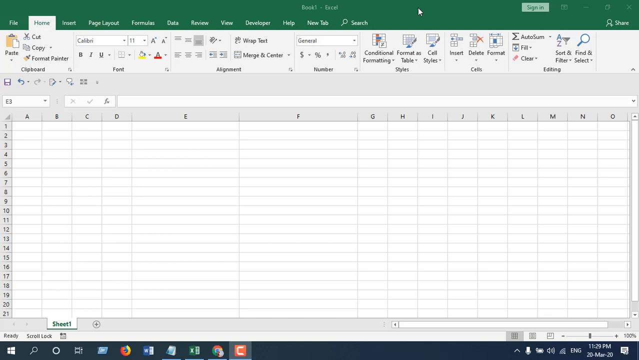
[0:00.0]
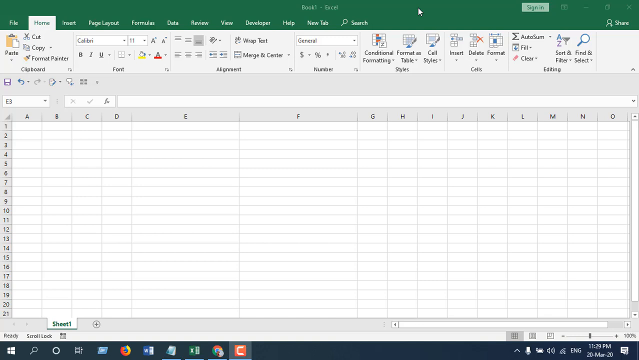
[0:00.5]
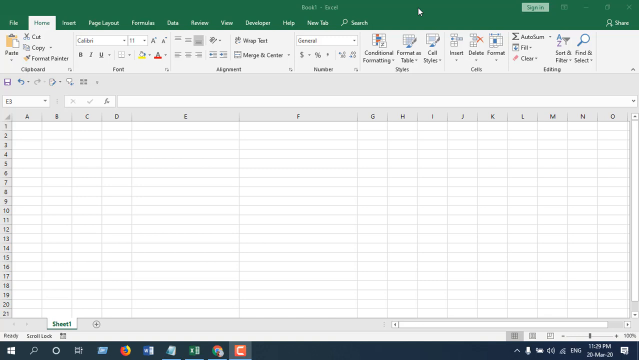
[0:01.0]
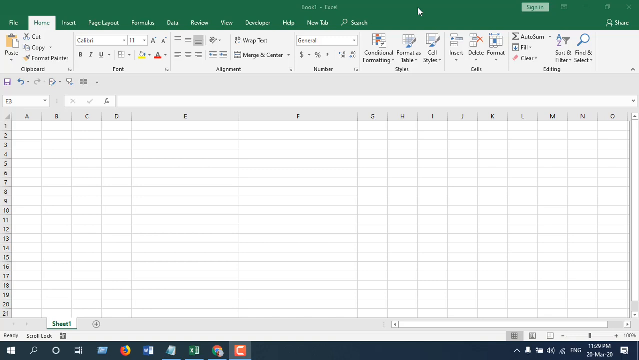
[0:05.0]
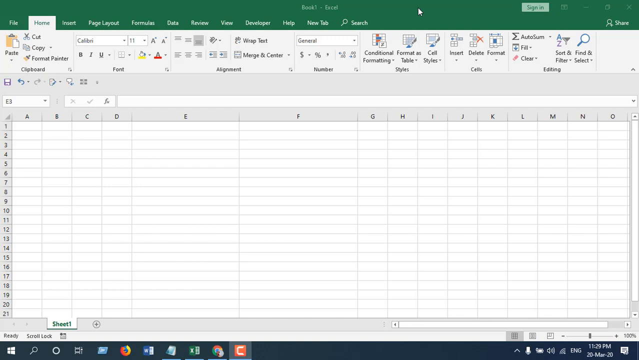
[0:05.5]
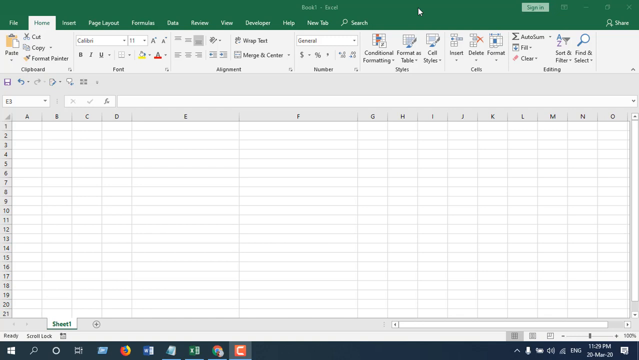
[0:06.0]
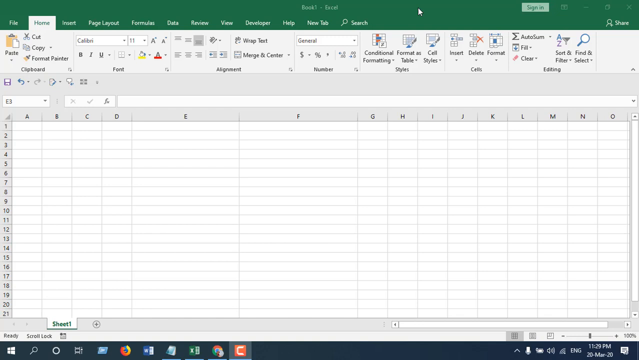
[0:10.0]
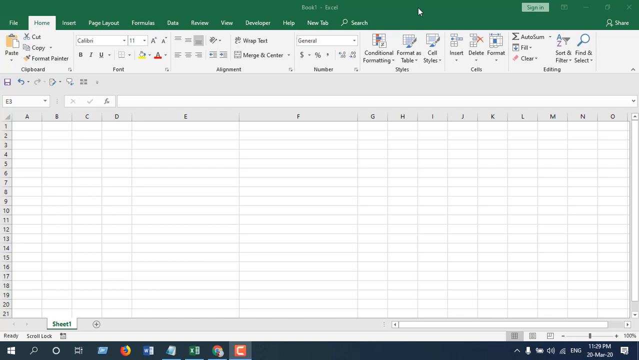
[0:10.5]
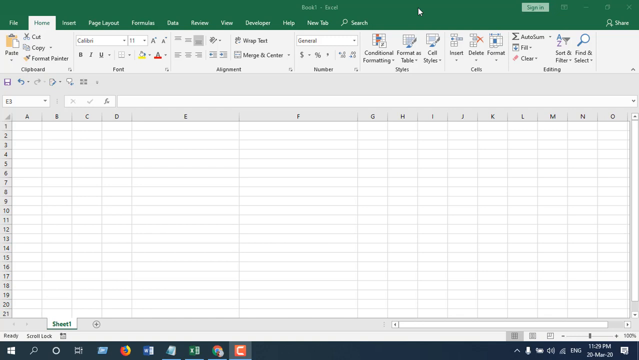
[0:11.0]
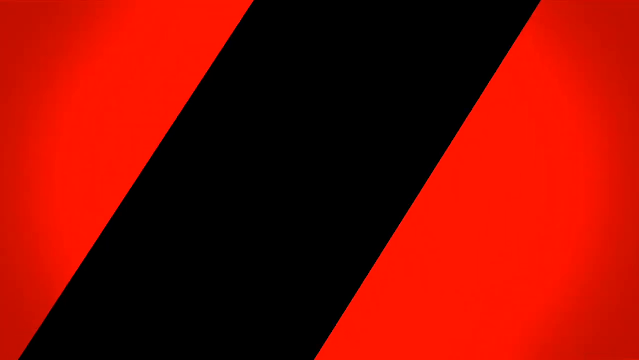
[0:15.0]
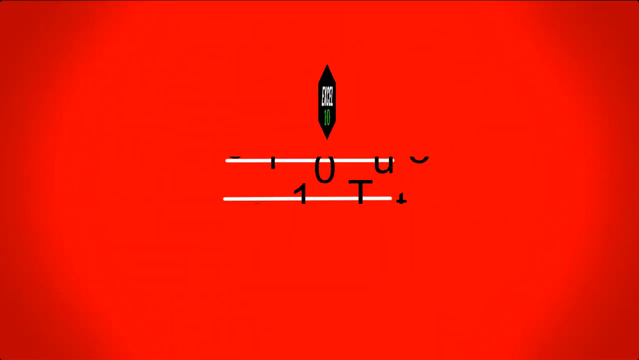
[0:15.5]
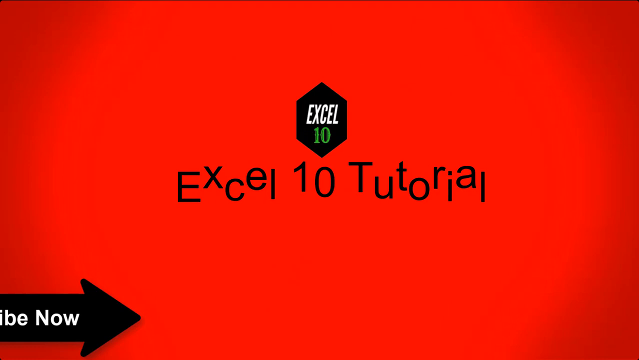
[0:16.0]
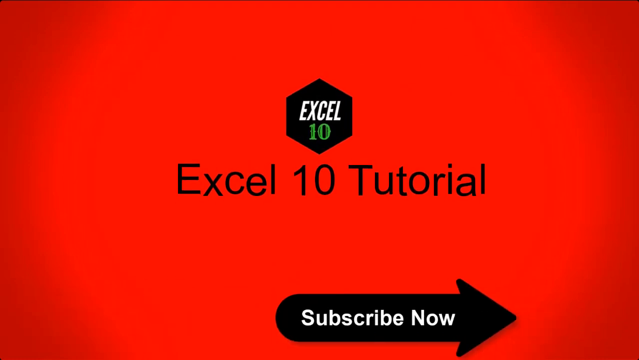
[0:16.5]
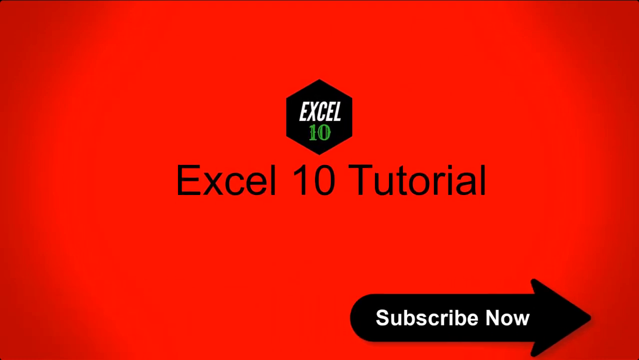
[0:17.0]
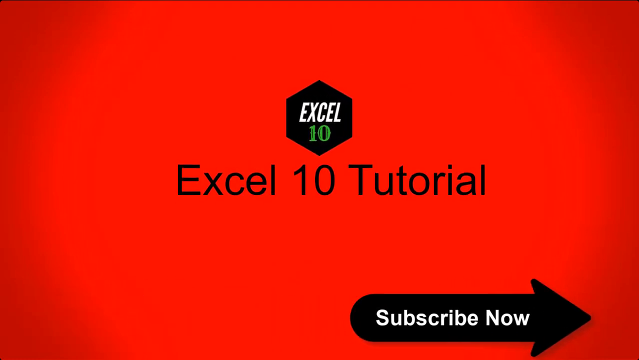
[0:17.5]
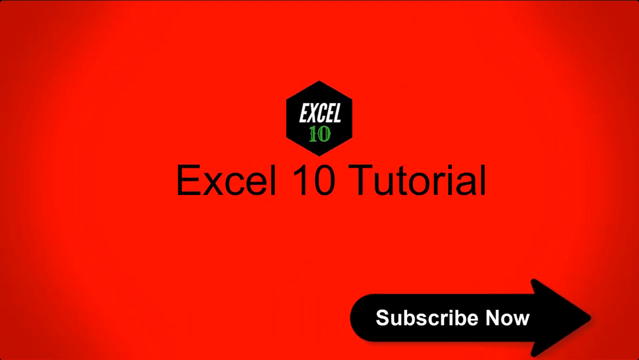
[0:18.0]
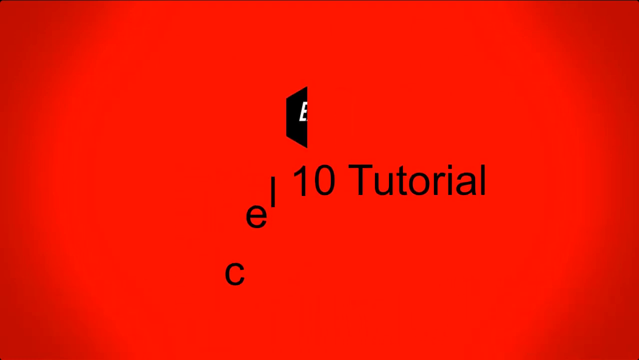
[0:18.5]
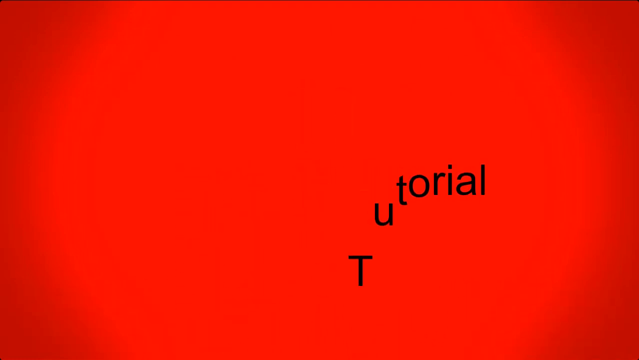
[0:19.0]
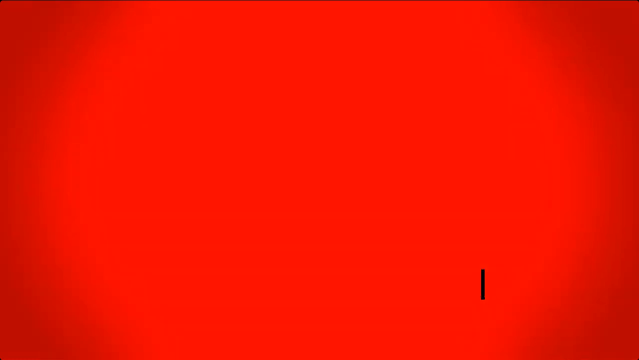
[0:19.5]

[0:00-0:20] An Excel document is open, and it looks like it is being shared from a PC or a laptop. The document is editable, and nothing is written on it yet. At the bottom, "sheet 1" is shown. Along the top are file, home, insert, page layout, formulas, date, review, view, help, new tab, and search. Column letters run from A to O. The person can type on the document and edit what they have typed. At the end, the text "Excel 10 Tutorial" appears, suggesting the person is apparently teaching how to use Excel.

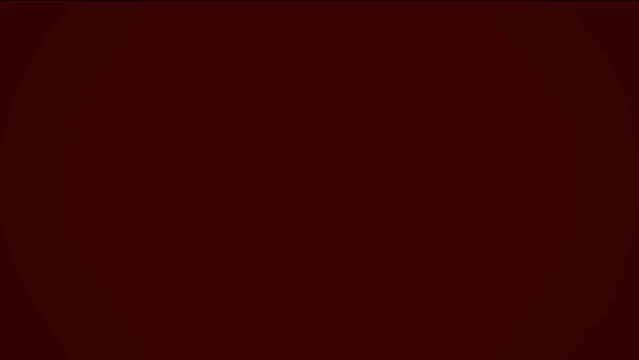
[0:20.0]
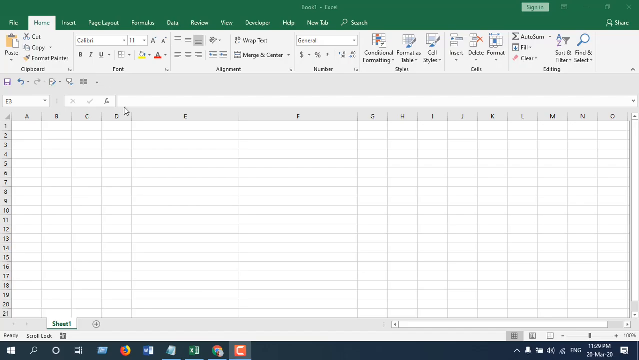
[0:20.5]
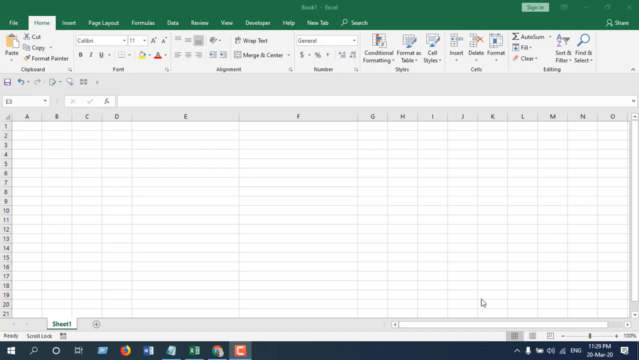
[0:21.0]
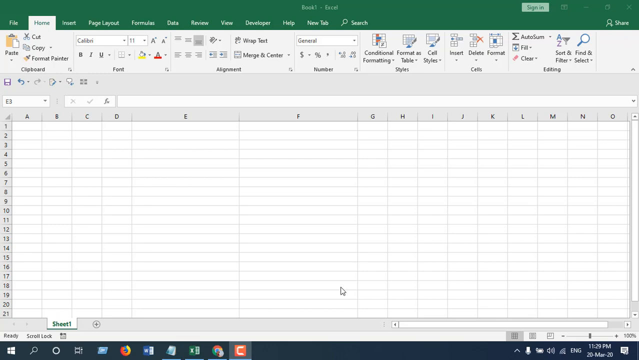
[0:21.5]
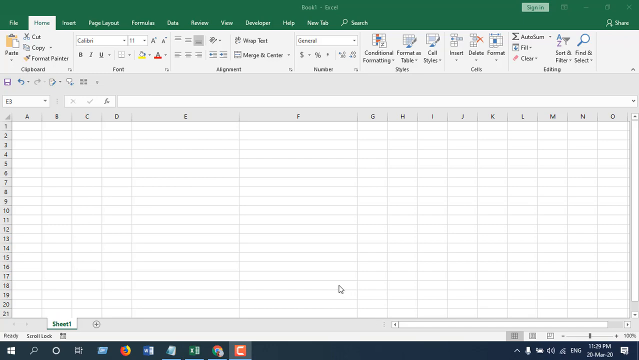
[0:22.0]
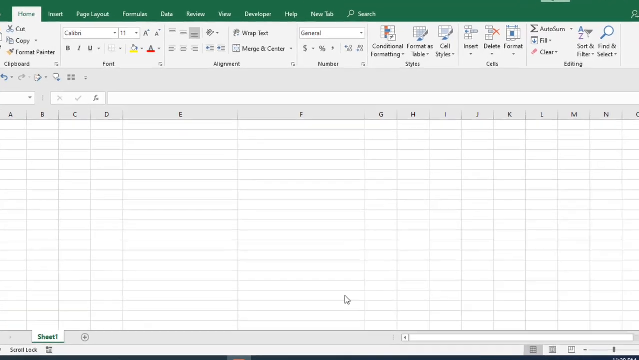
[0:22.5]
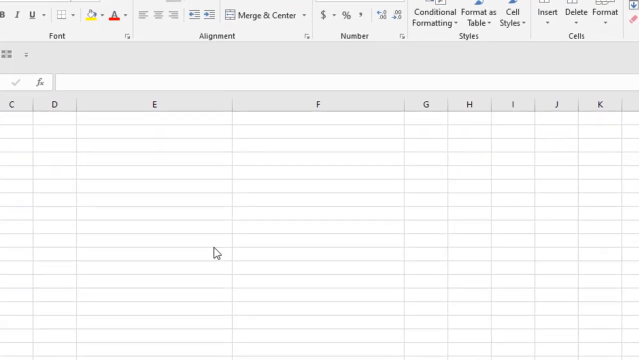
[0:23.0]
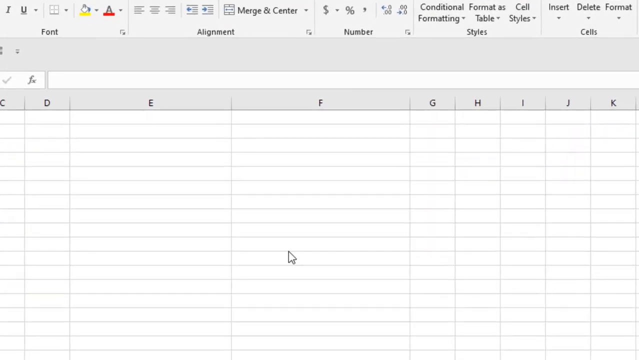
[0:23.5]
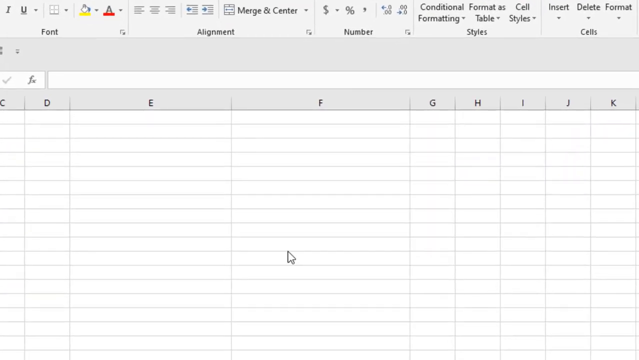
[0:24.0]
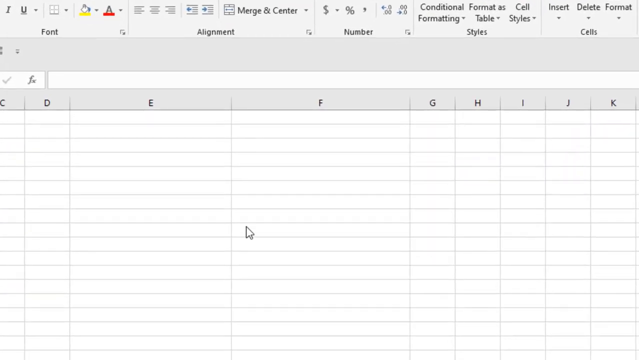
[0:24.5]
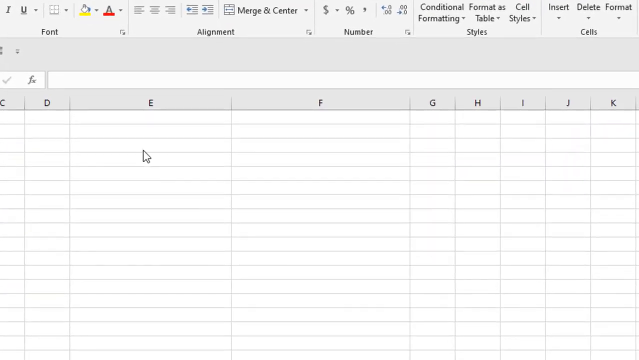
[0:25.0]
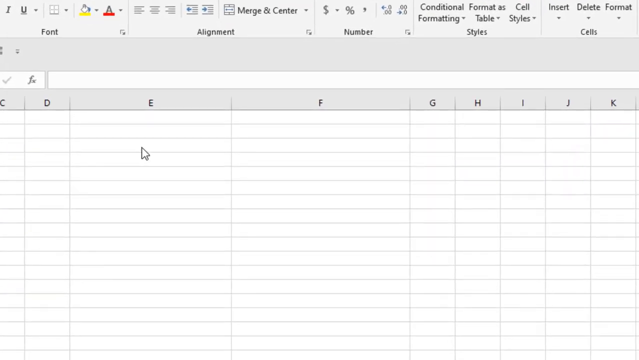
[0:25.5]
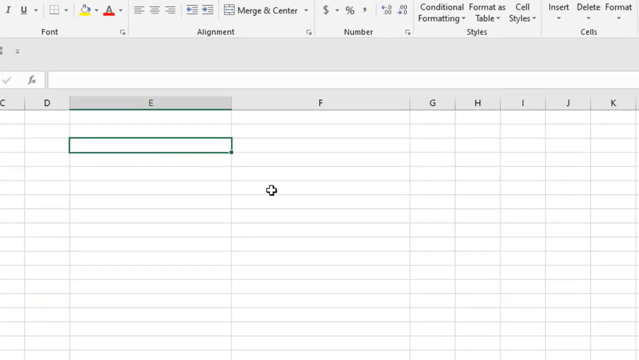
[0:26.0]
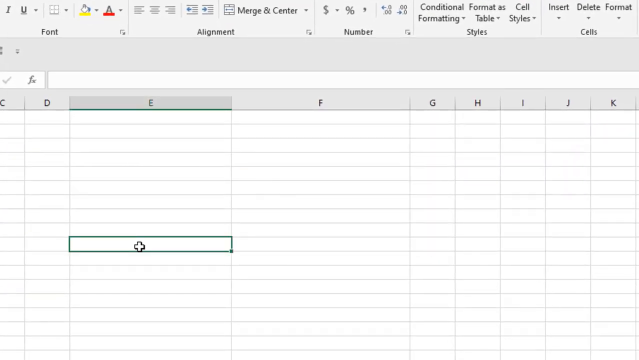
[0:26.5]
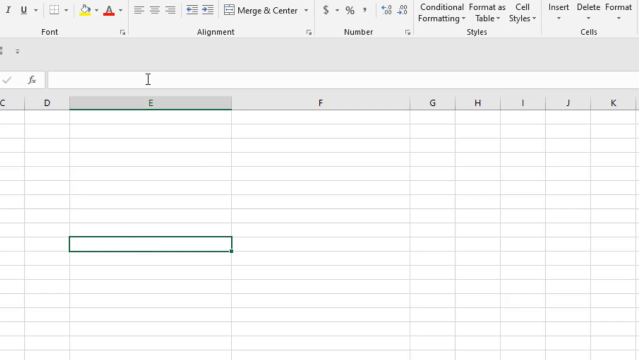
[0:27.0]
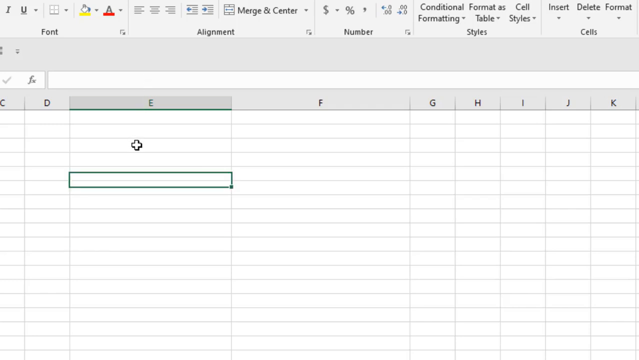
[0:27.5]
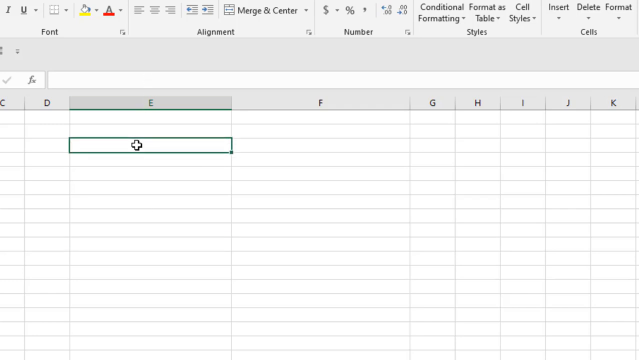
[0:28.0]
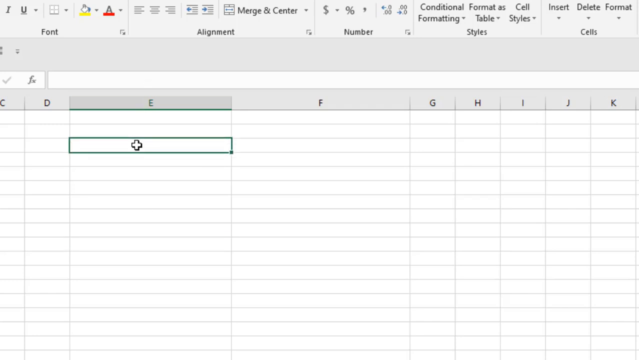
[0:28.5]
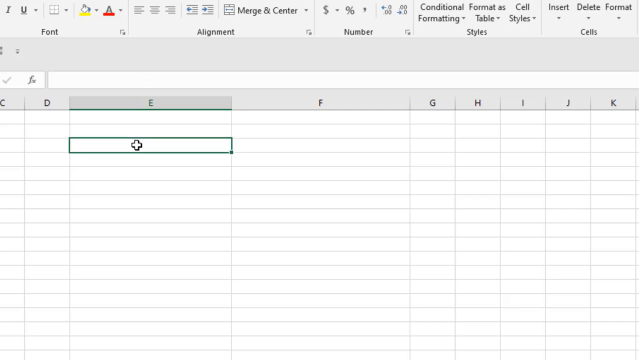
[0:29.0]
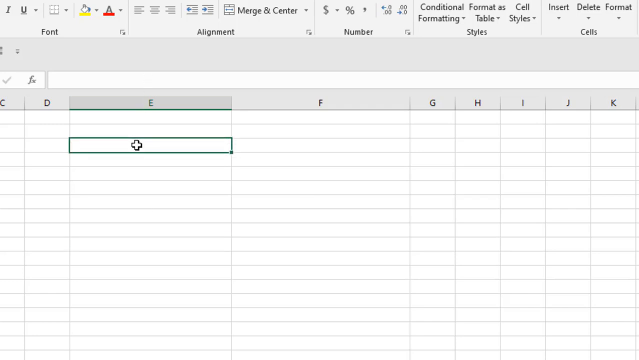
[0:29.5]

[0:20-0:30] The person demonstrates how to type into the cells of the Excel document, zooming in on the page and clicking on one of the columns. Column E is used to demonstrate typing into the document.